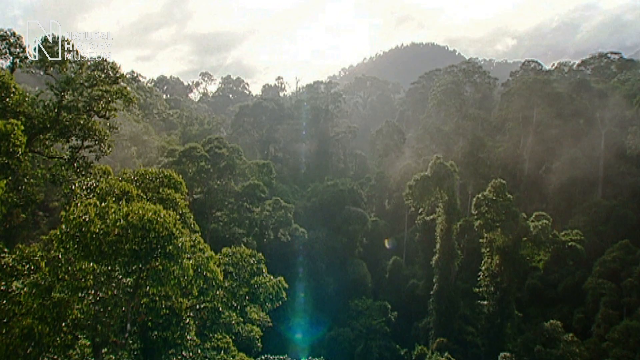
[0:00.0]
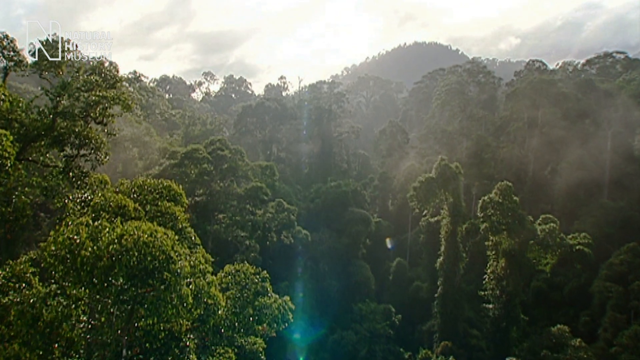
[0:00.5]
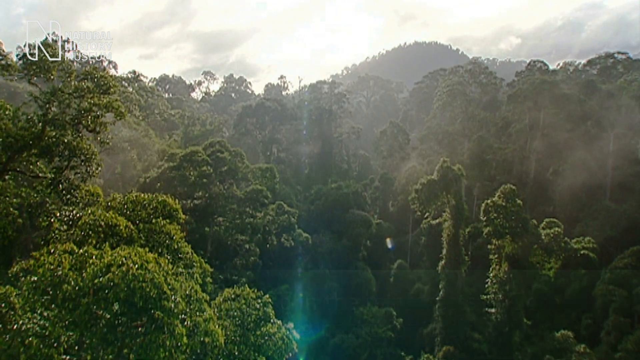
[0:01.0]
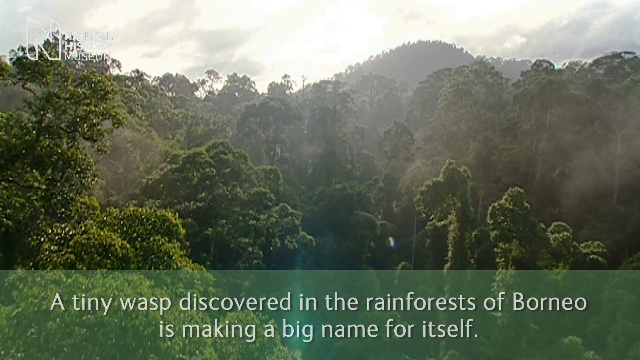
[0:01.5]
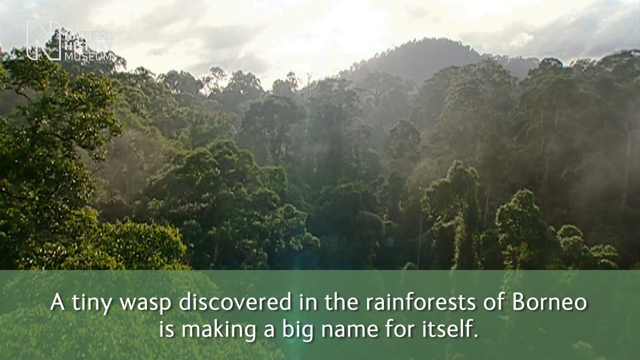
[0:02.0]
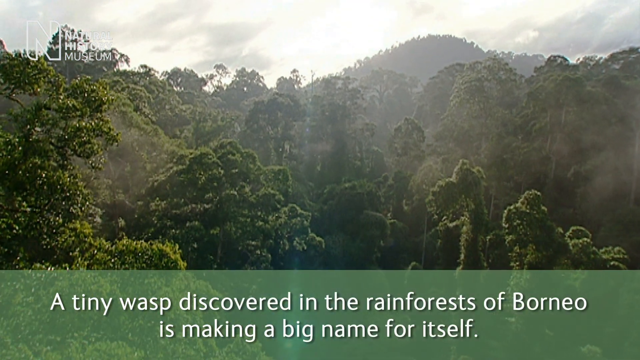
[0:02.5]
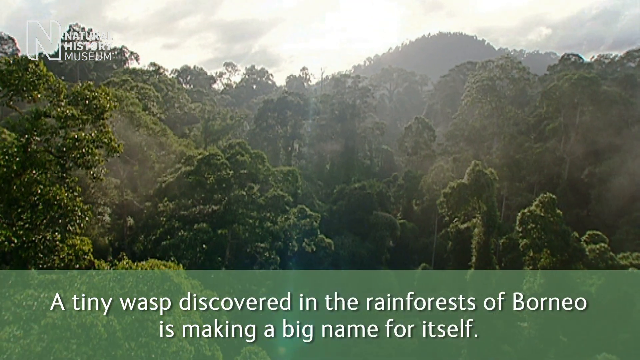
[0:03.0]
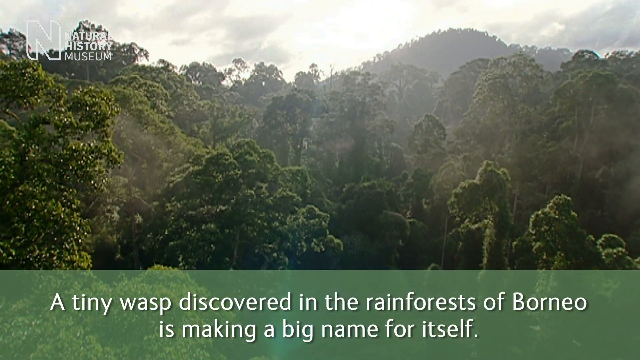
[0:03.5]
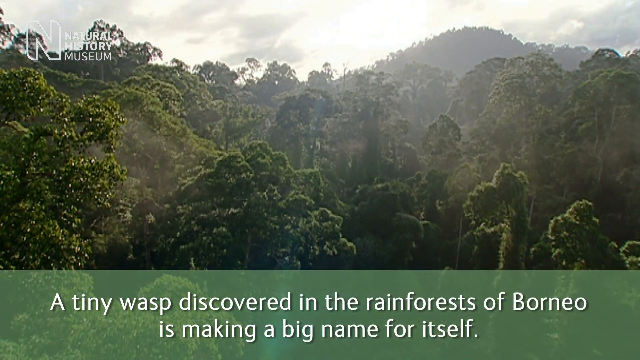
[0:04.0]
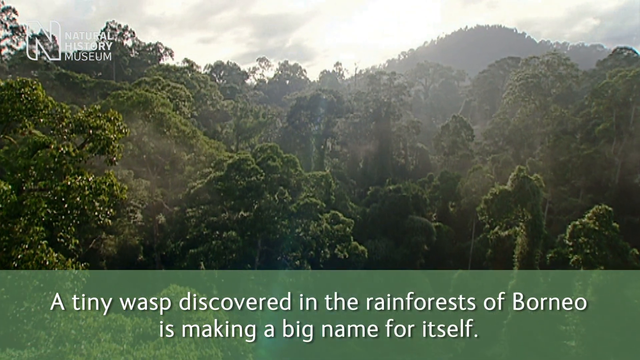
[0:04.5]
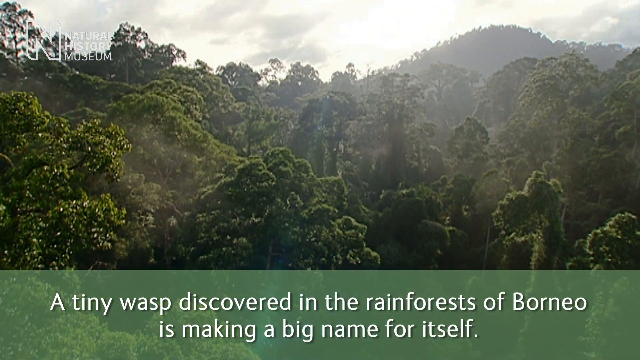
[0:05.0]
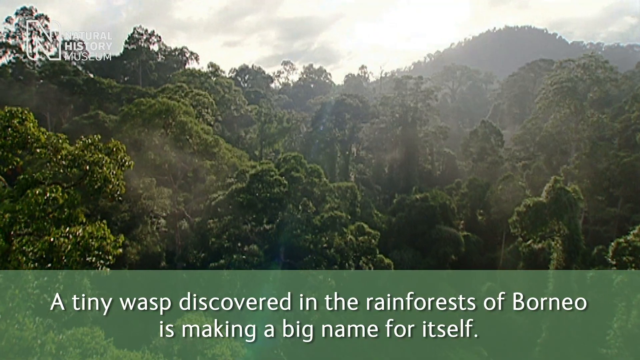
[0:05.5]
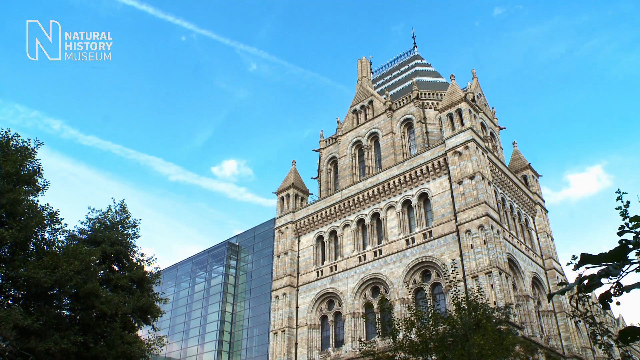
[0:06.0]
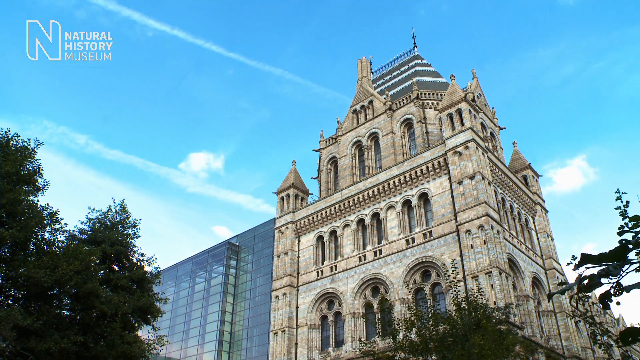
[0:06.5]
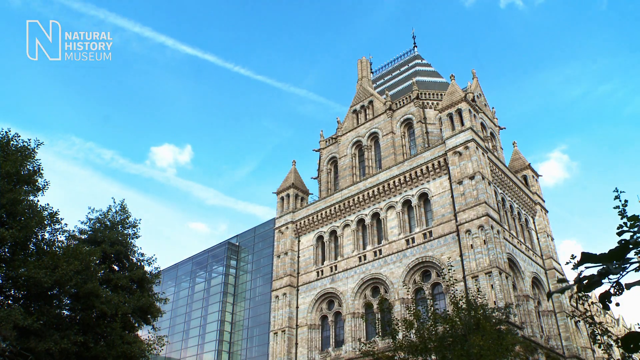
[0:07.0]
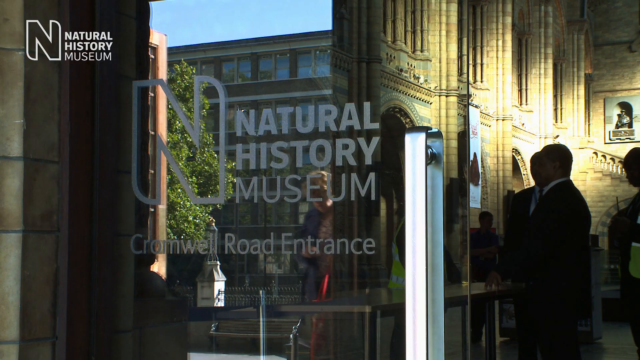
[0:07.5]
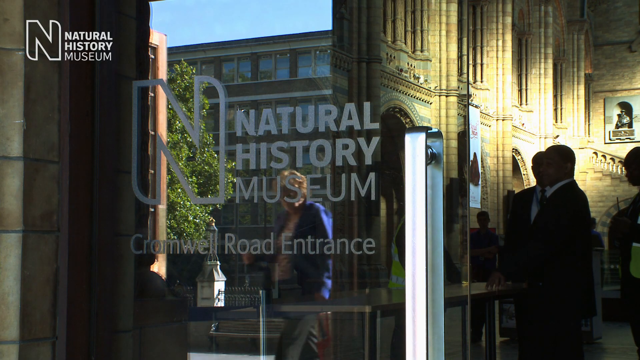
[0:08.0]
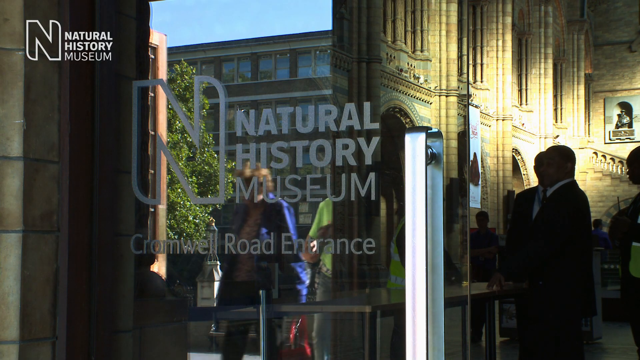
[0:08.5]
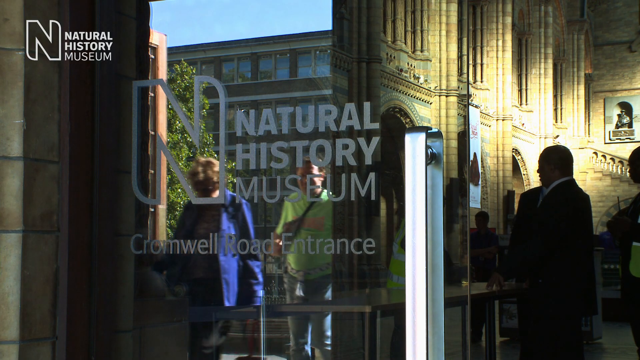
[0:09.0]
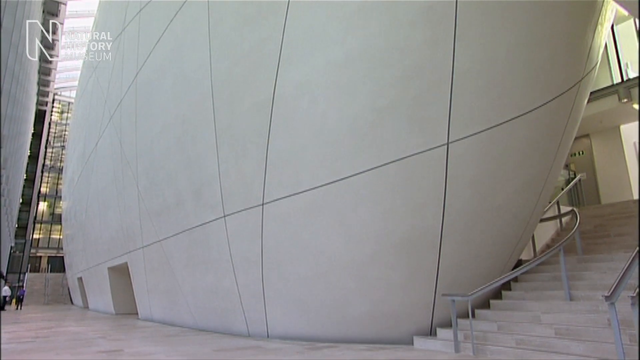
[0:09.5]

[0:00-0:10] The video opens with an overview of a rainforest, as if an airplane or a helicopter is passing over it. There is a large hill in the background, very tall trees and a misty effect, and the aircraft seems to be moving towards the large mountain, veering slightly to the left. Text at the bottom of the screen refers to a tiny wasp being discovered in the rainforests of Borneo. The video then cuts to a building that looks like the Natural History Museum, with perhaps the Science Museum next to it. There are vapour trails in the sky, and different forms of light appear against the windows as if in a time-lapse. The view returns to the front of the Natural History Museum with some people walking by. A lady in a blue coat, behind the museum's glass front entrance and Cromwell Road entrance, walks from left to right, followed by a man in a green shirt. On the right-hand side of the picture, people inside the museum appear to be talking to one another in the shadows, while bright light comes in from the right, shining towards the left of the old building. The next shot could be the inside of the Natural History Museum, or more likely the Science Museum or similar. There are stairs towards the left, and the camera pans from the bottom of the stairs up towards the top of what looks like the outside of a white stairwell. In the far left there is a picture that appears to show different levels of a more modern building.